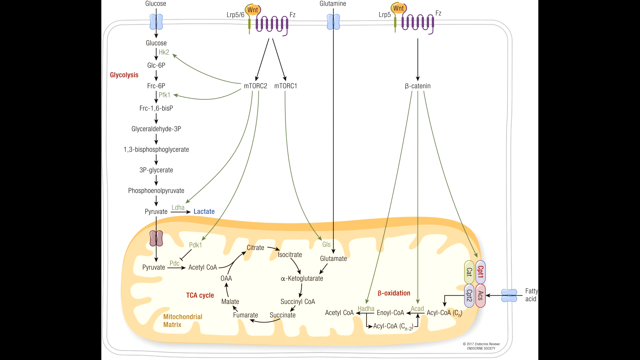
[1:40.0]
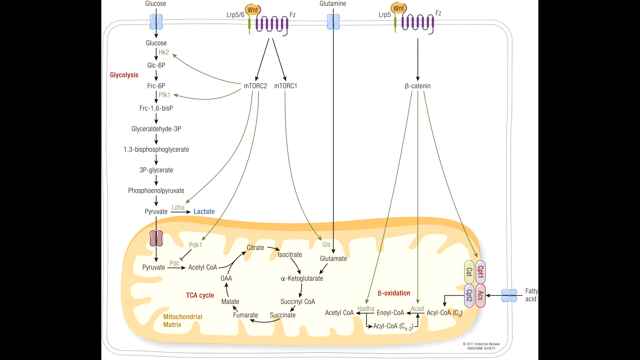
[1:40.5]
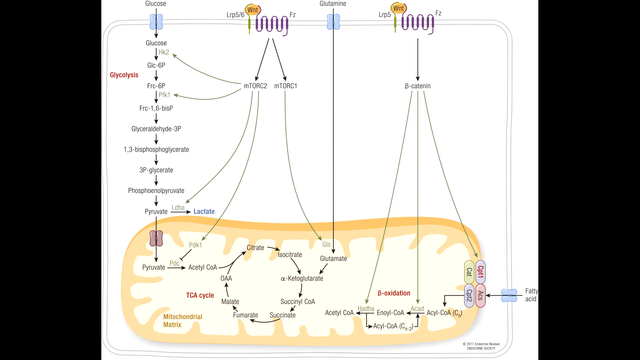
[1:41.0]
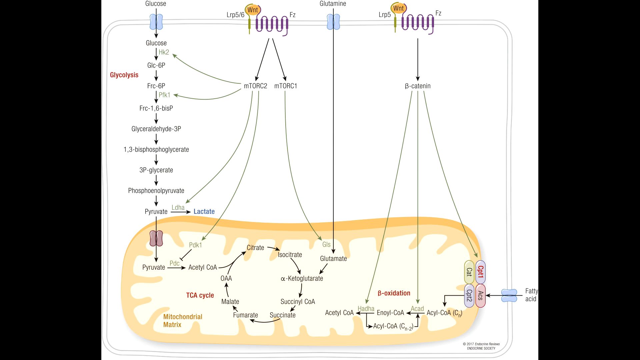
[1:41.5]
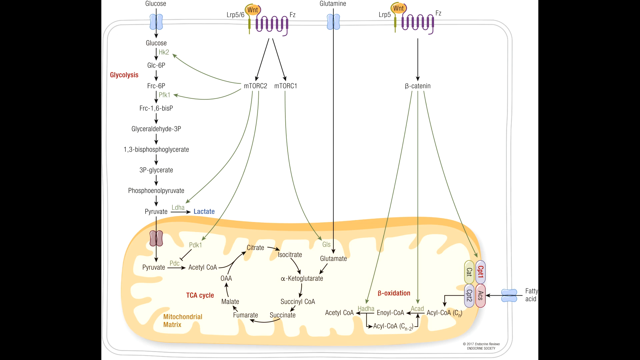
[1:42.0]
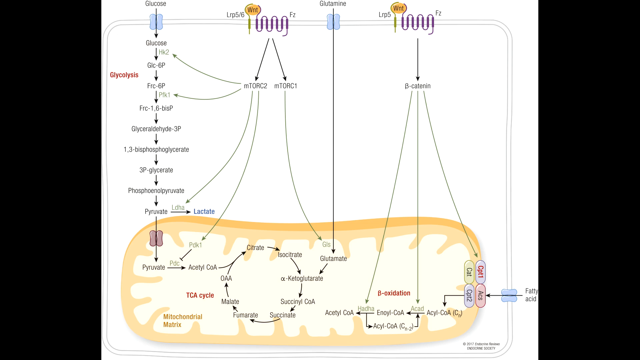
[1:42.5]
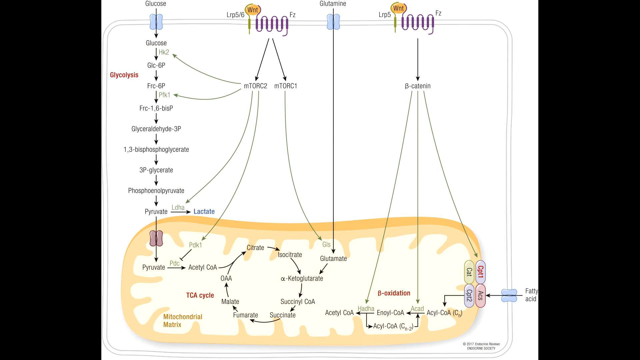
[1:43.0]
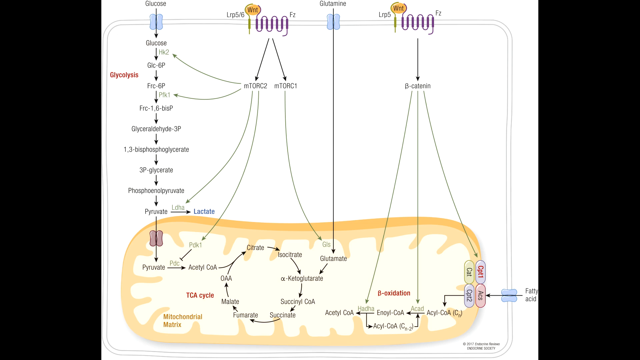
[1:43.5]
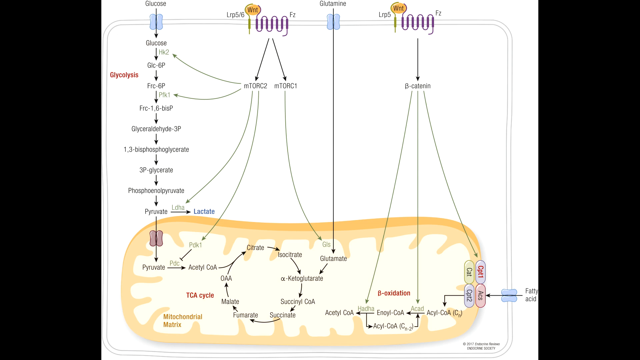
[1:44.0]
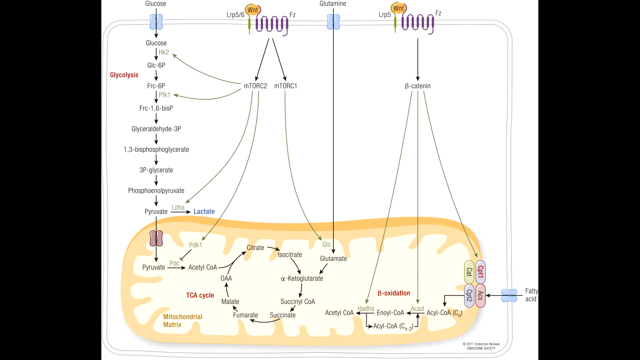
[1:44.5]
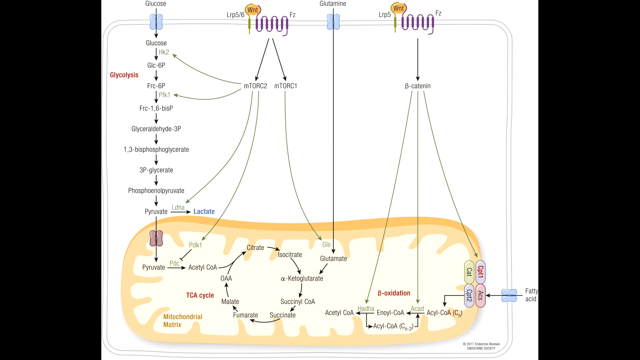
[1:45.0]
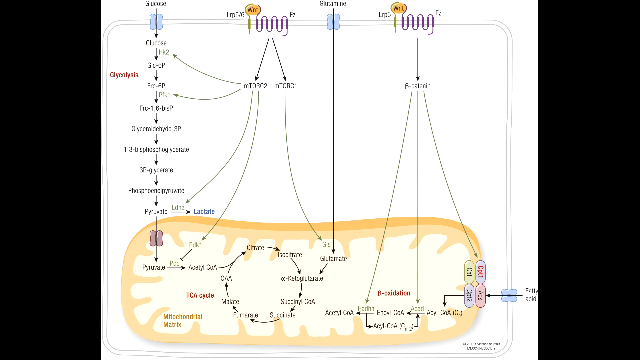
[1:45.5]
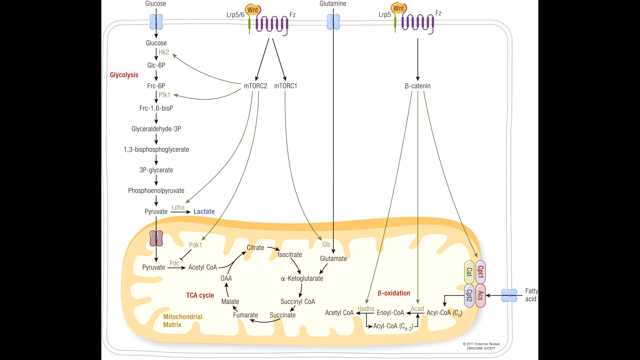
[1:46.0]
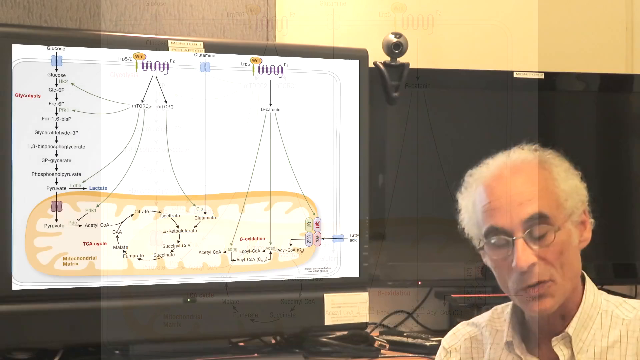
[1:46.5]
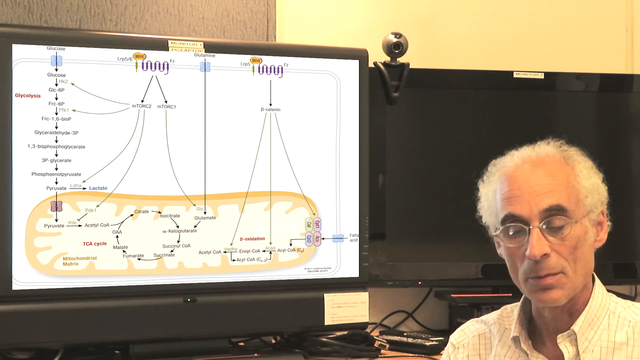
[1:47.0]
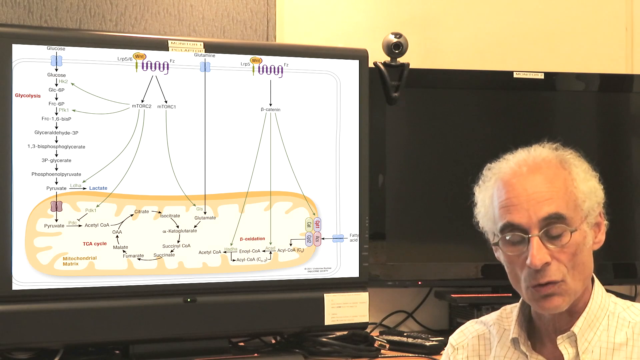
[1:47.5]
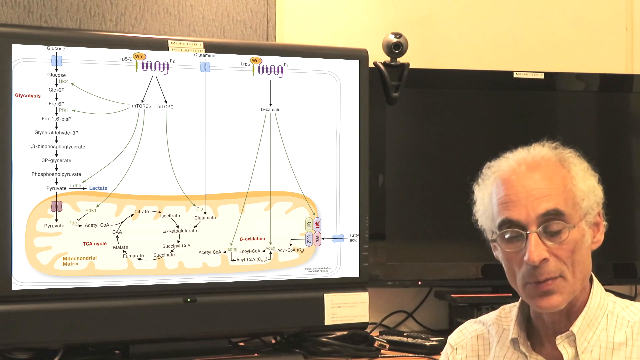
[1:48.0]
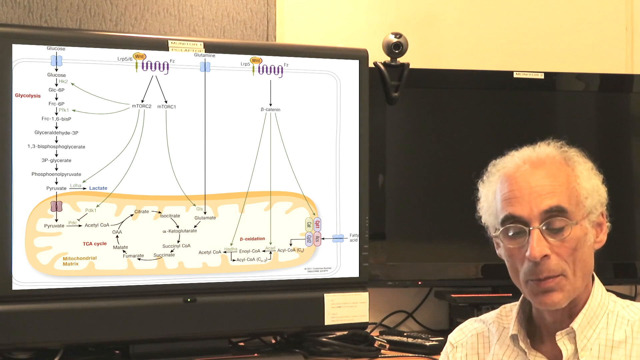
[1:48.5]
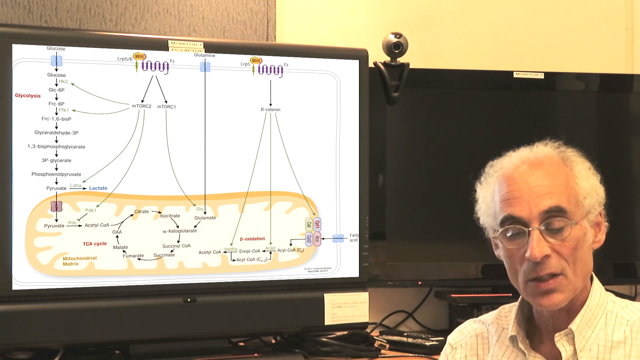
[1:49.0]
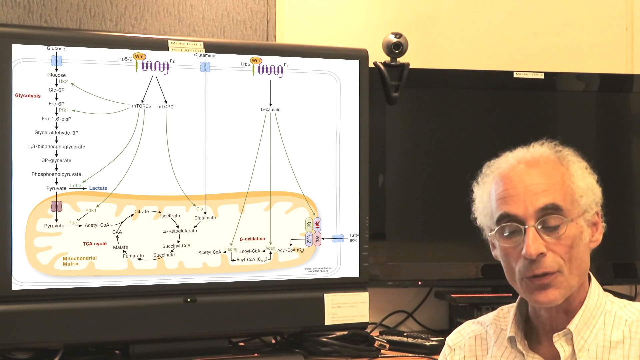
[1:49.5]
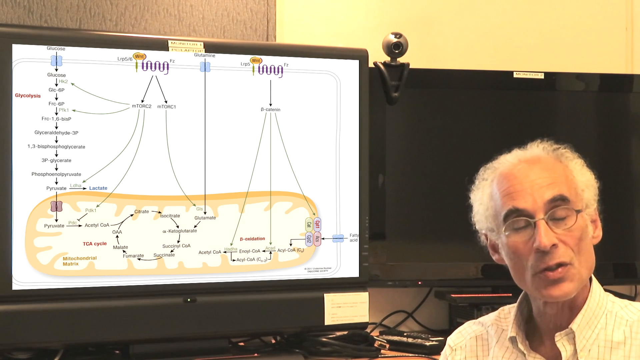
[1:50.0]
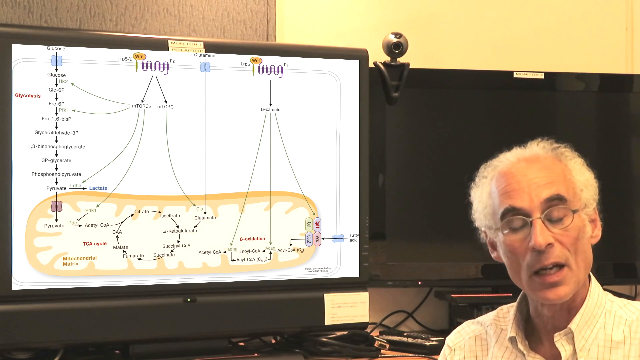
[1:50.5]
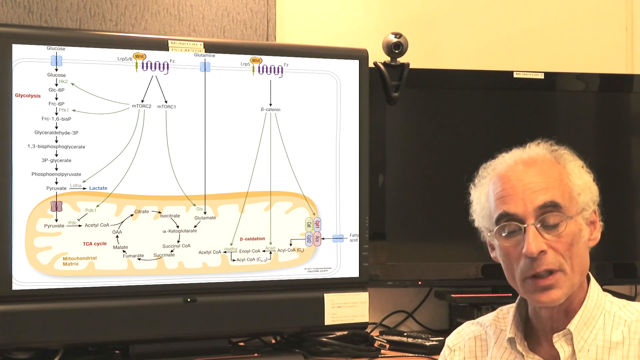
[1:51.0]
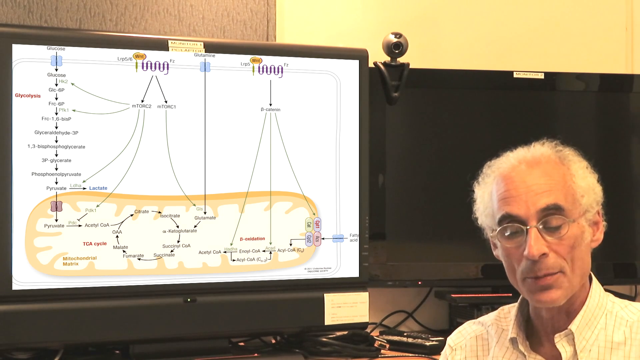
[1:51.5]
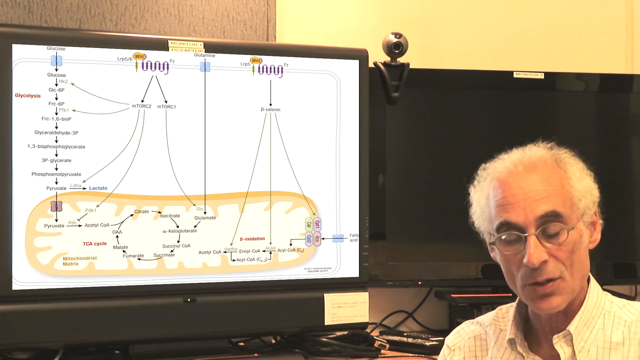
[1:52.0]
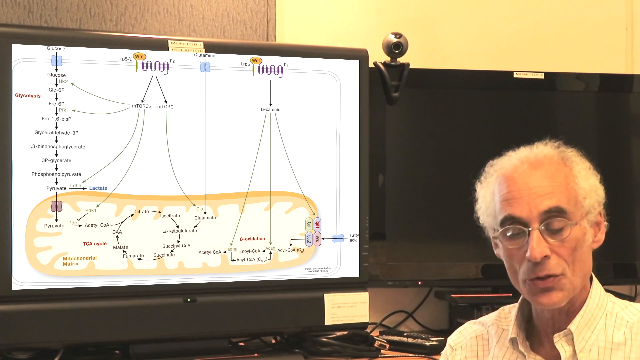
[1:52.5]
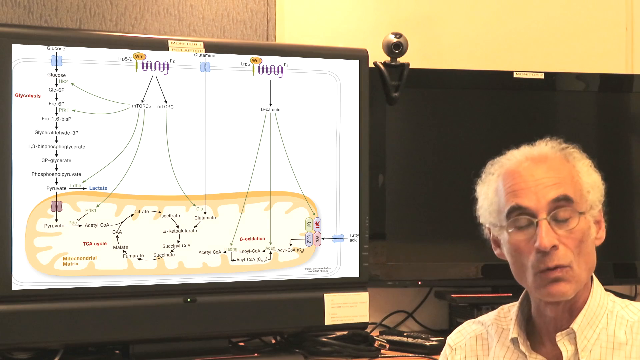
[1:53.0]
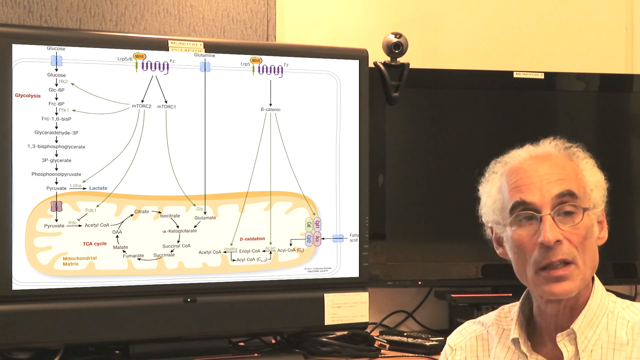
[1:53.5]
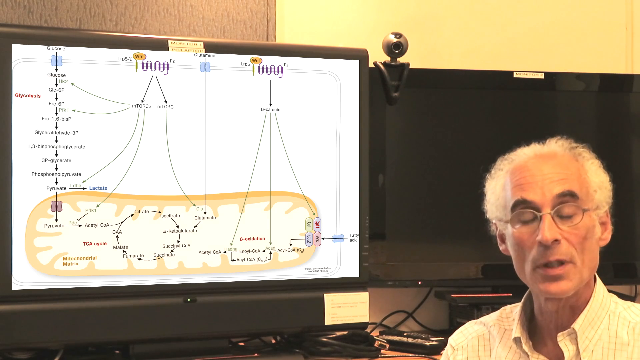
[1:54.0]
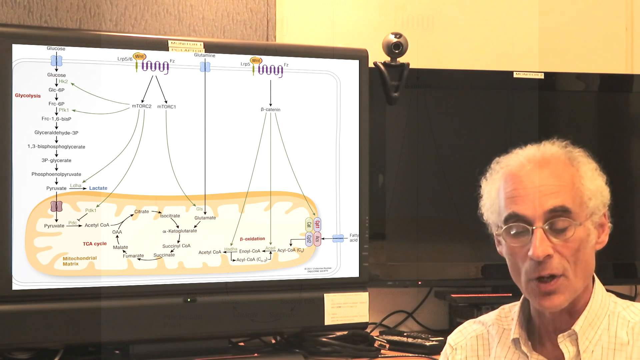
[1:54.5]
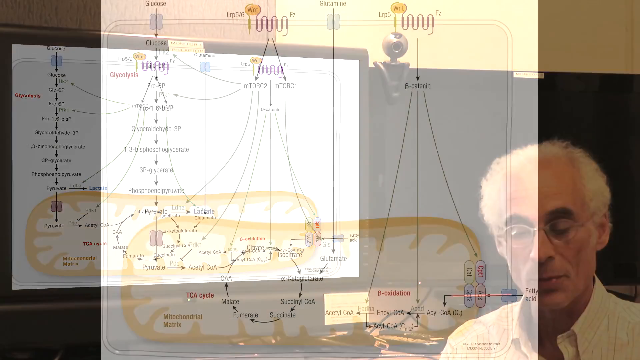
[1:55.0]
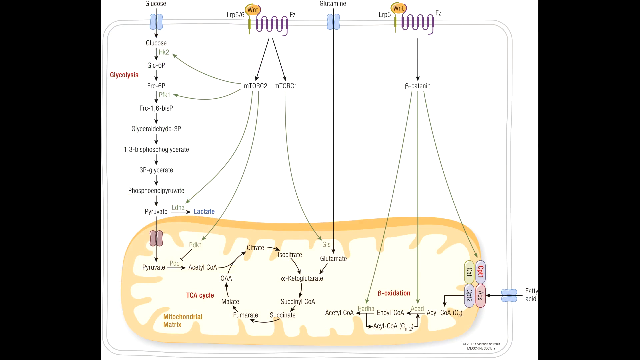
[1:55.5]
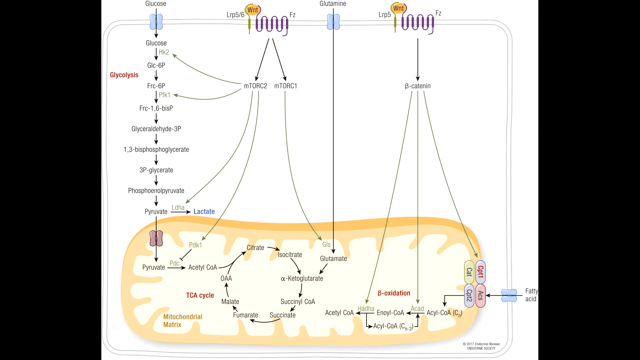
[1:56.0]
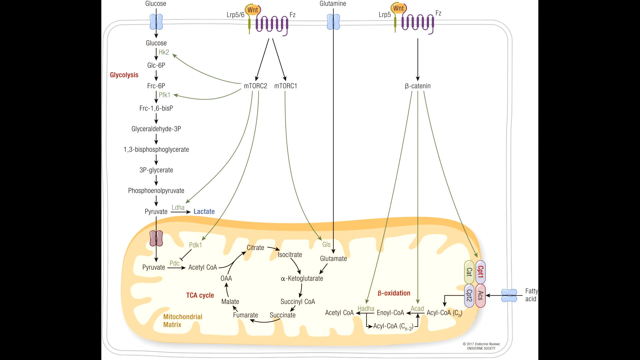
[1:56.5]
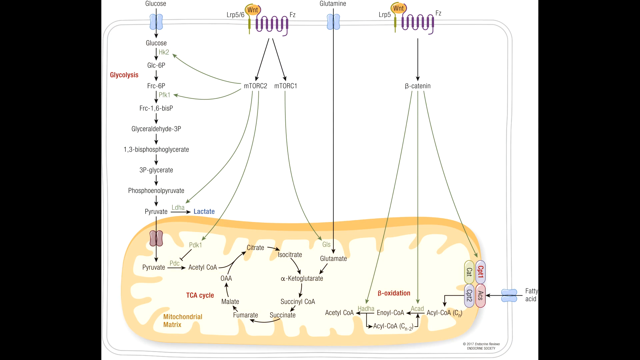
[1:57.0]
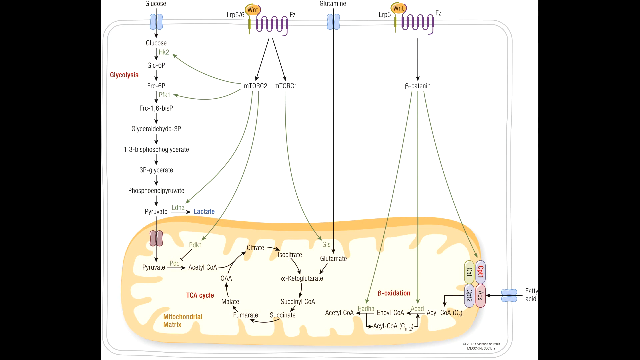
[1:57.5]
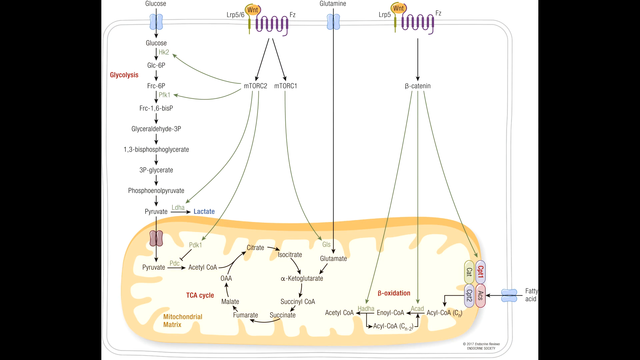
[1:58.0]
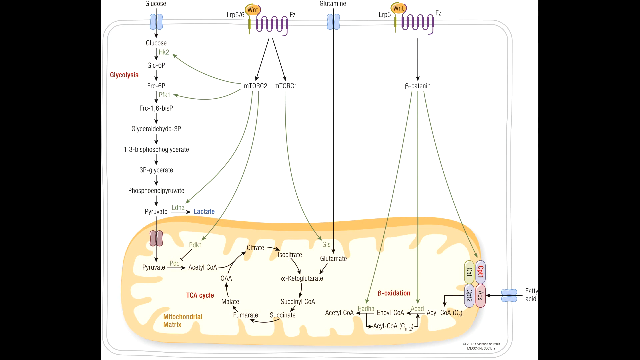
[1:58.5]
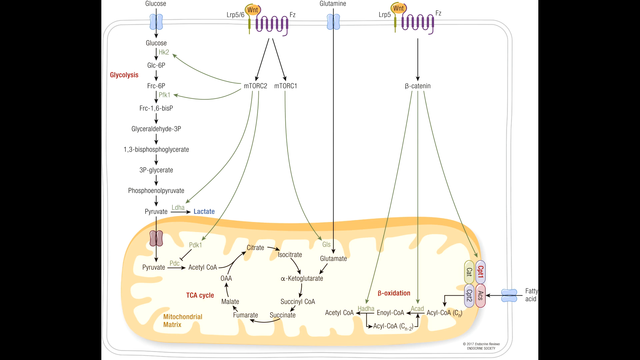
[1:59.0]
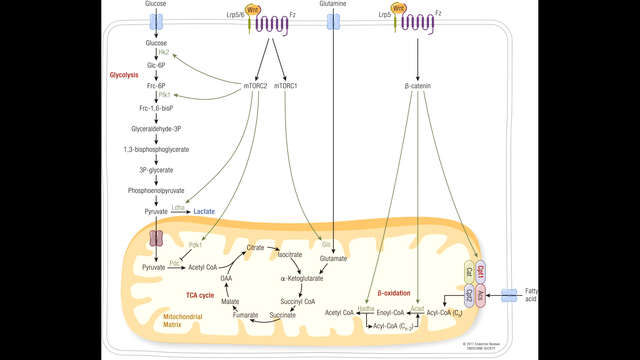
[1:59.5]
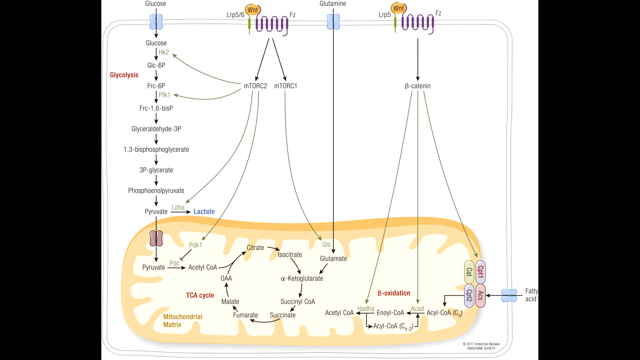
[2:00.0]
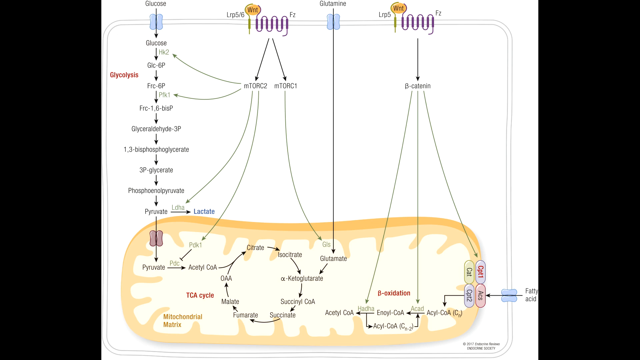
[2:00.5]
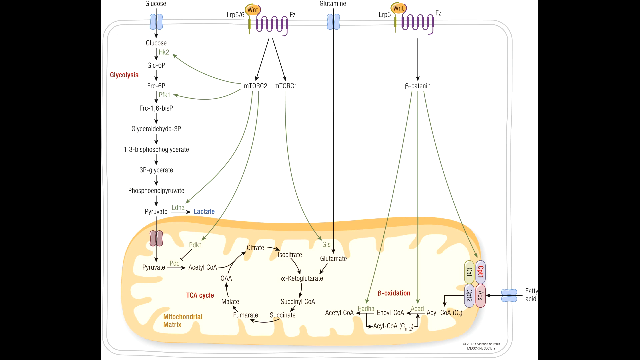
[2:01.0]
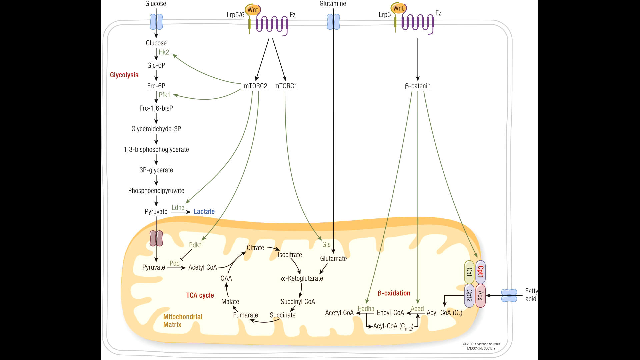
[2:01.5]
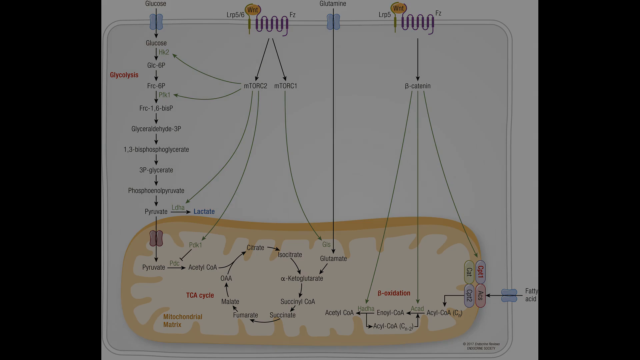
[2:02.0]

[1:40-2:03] An illustration, a diagram of sorts, shows a flow chart that begins at the top left with "glucose" and a black arrow pointing down through several intermediate labels to "pyruvate". This leads into a somewhat oval-shaped yellow and gold object or cell, inside of which another flow chart circulates in a circle called the "TCA cycle". The scene then changes back to the monitor, with the gentleman in the right corner, visible only from the shoulders up, speaking quite seriously and not cracking a smile; he has thin, pale skin, dark eyebrows and gray hair. It seems to perhaps be a class or a podcast. He never makes direct eye contact with the screen or viewers.